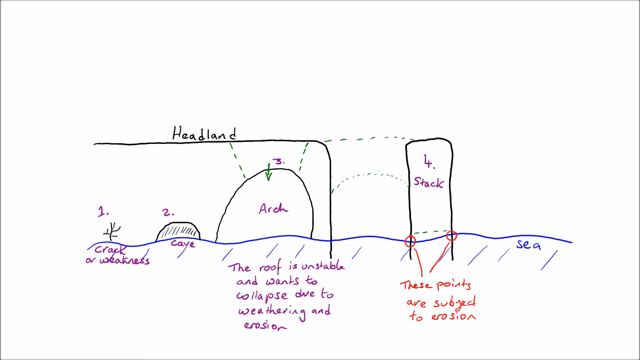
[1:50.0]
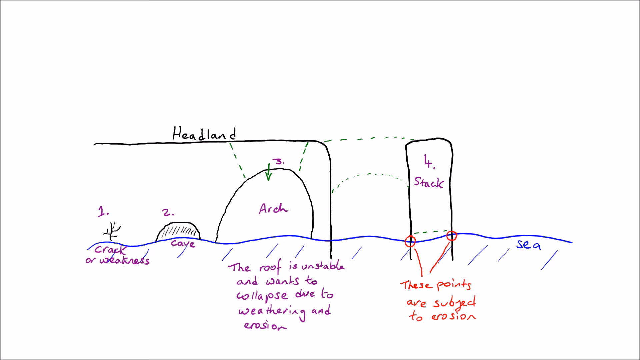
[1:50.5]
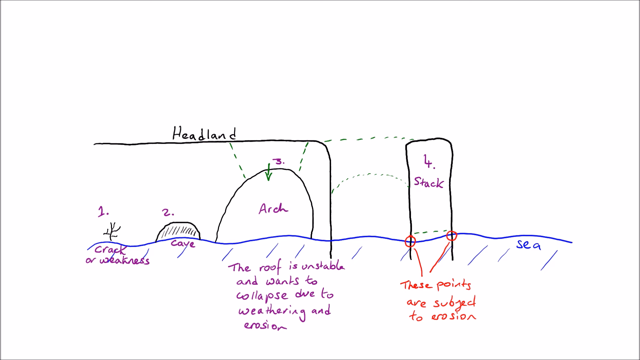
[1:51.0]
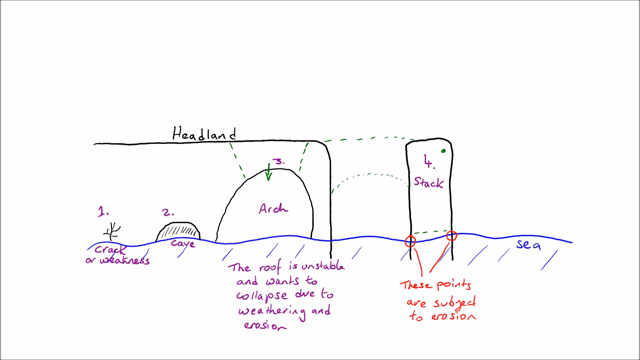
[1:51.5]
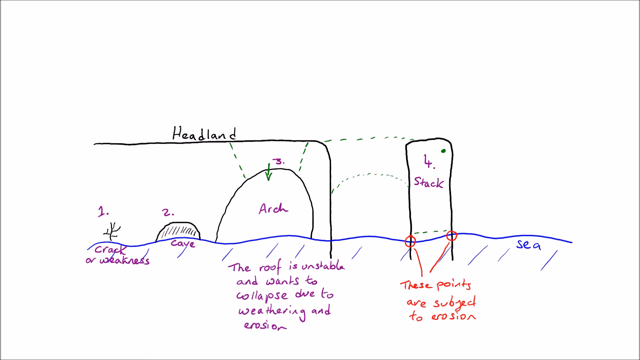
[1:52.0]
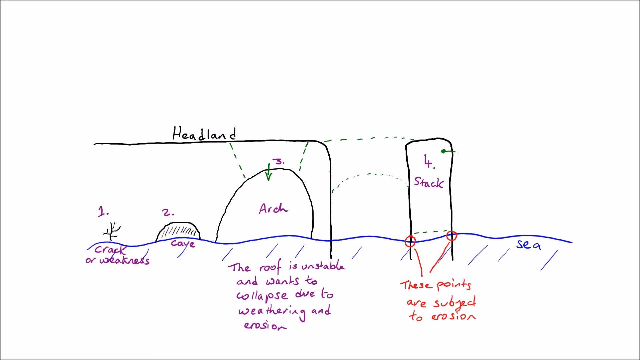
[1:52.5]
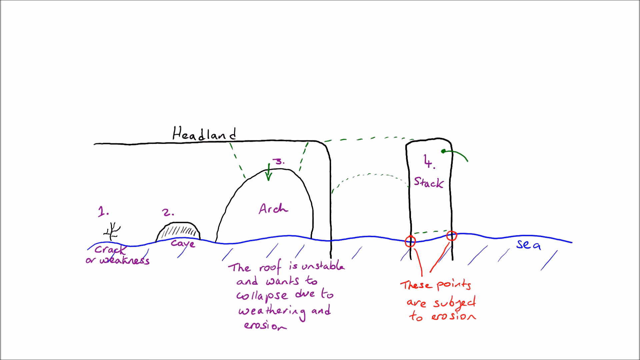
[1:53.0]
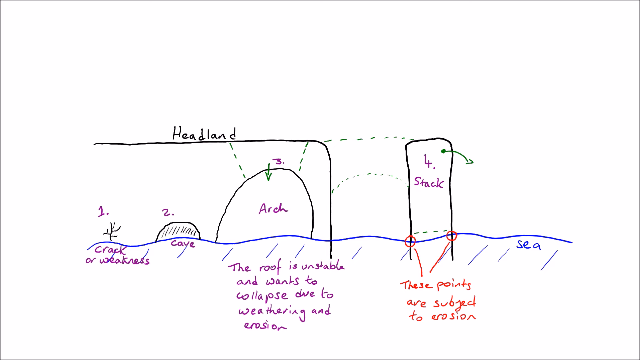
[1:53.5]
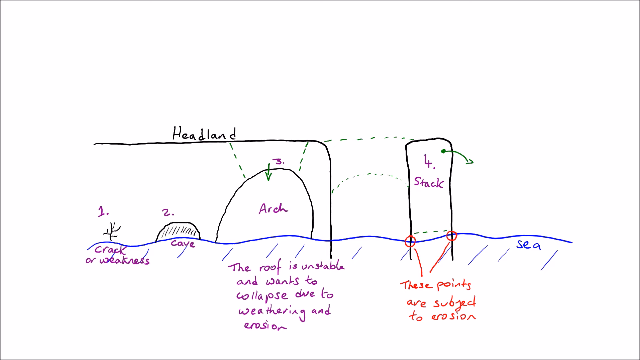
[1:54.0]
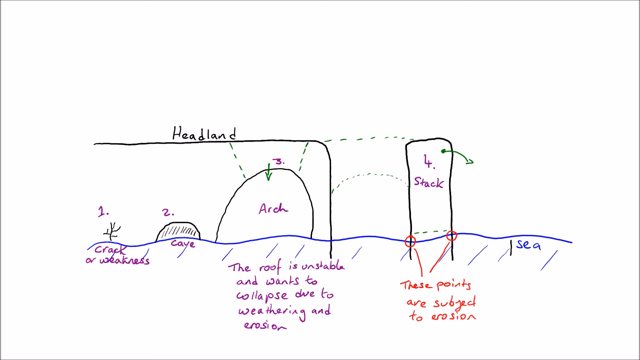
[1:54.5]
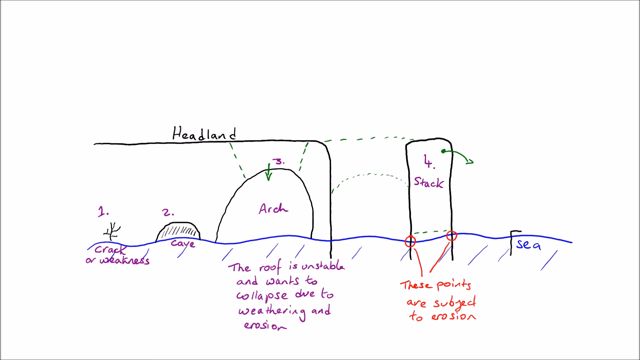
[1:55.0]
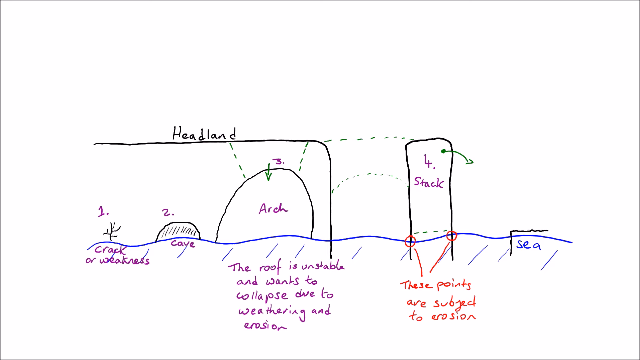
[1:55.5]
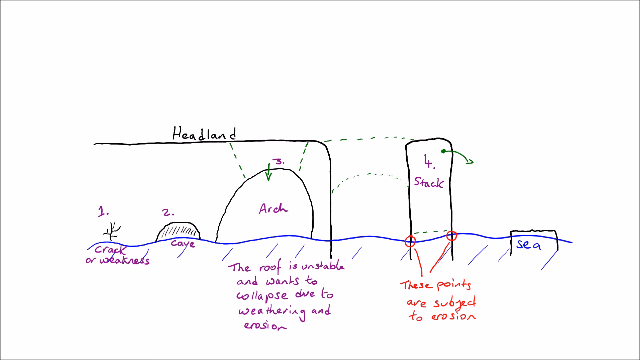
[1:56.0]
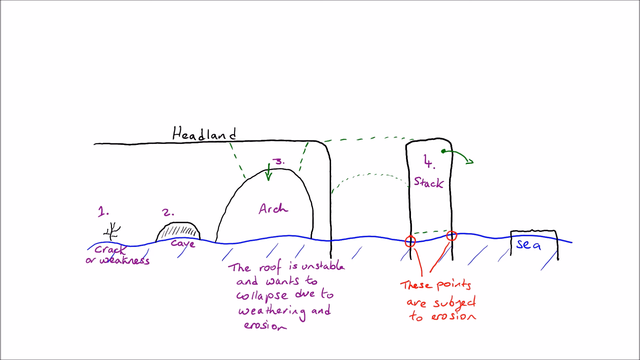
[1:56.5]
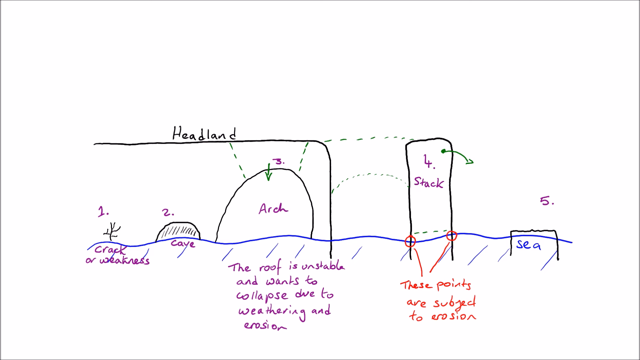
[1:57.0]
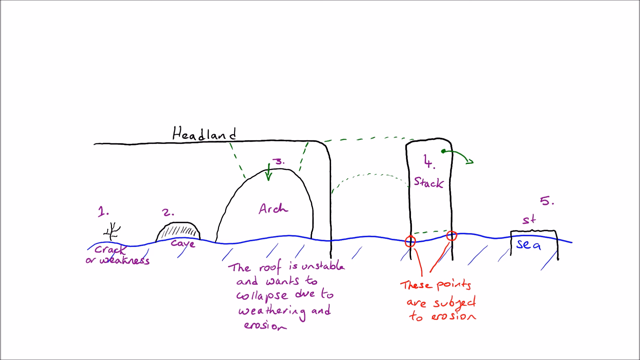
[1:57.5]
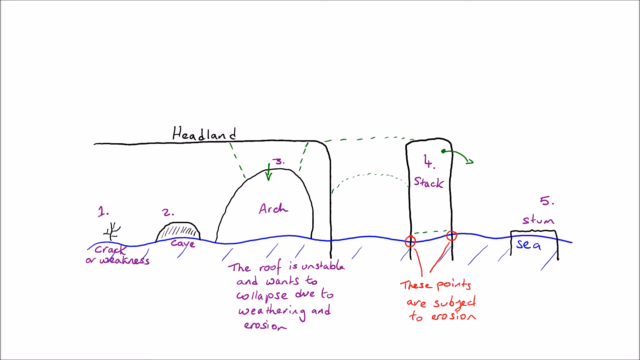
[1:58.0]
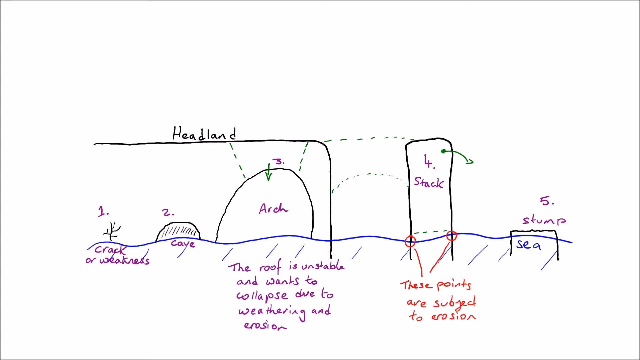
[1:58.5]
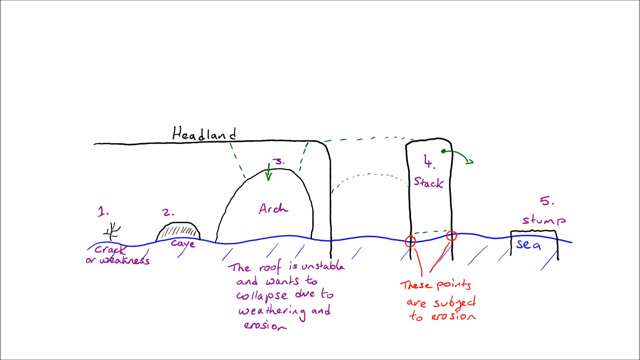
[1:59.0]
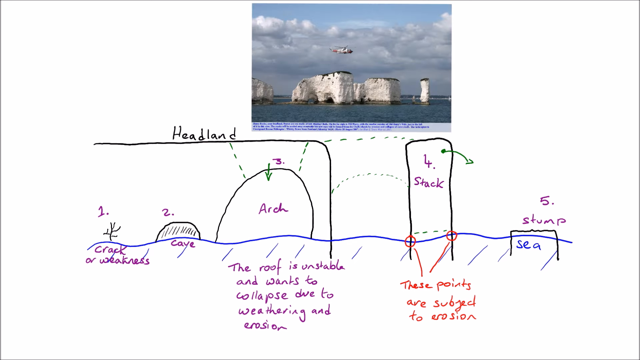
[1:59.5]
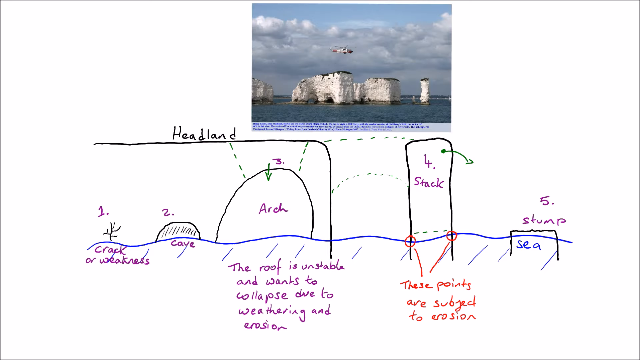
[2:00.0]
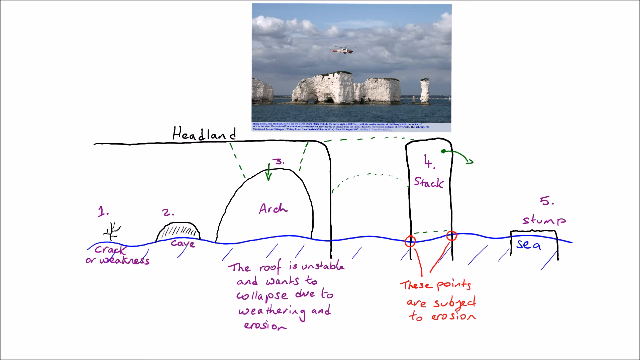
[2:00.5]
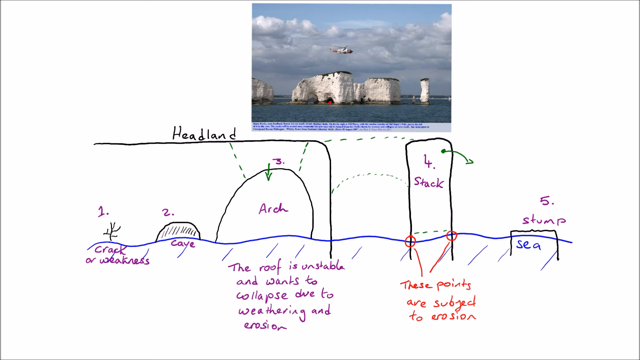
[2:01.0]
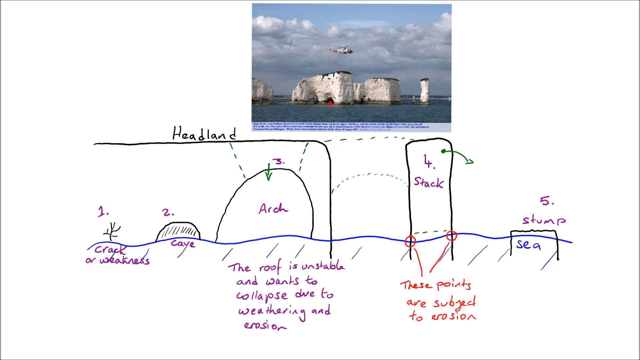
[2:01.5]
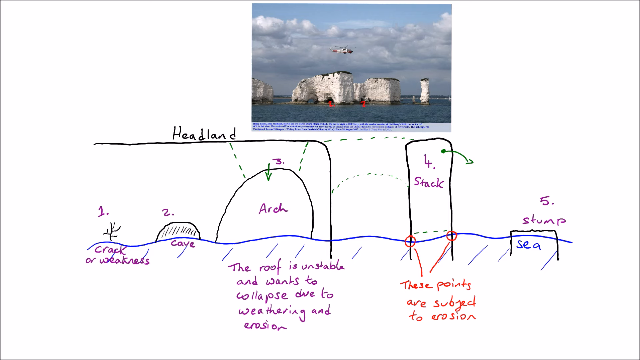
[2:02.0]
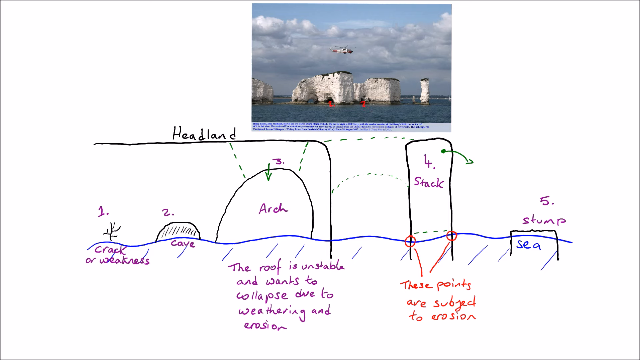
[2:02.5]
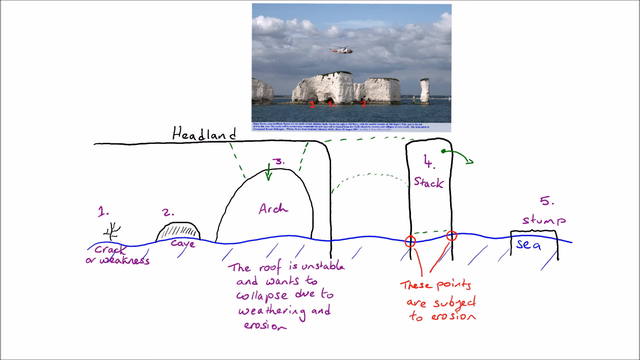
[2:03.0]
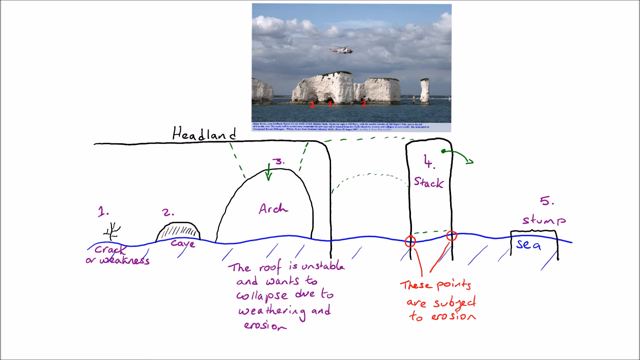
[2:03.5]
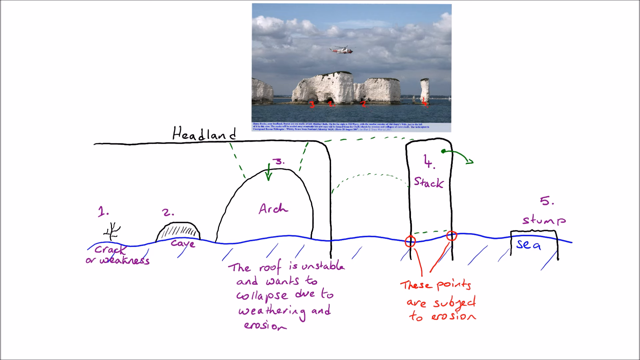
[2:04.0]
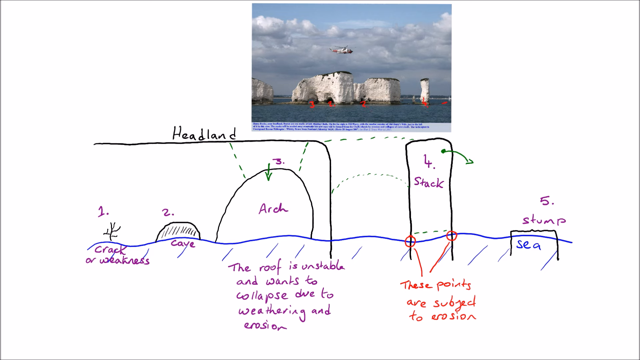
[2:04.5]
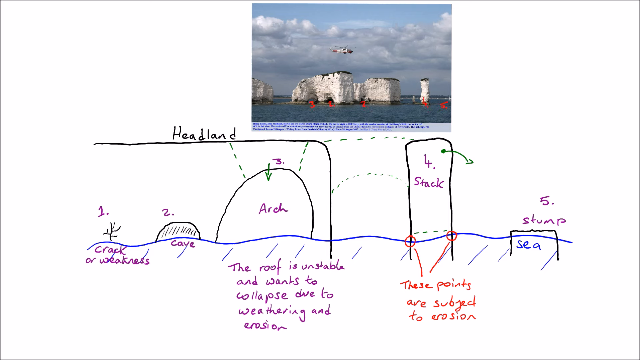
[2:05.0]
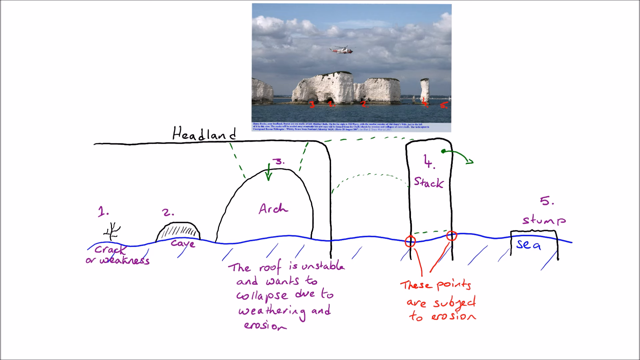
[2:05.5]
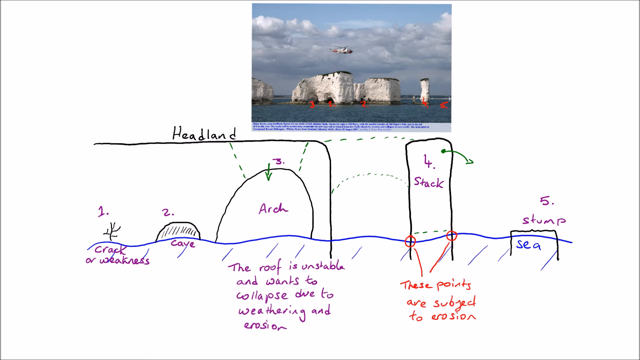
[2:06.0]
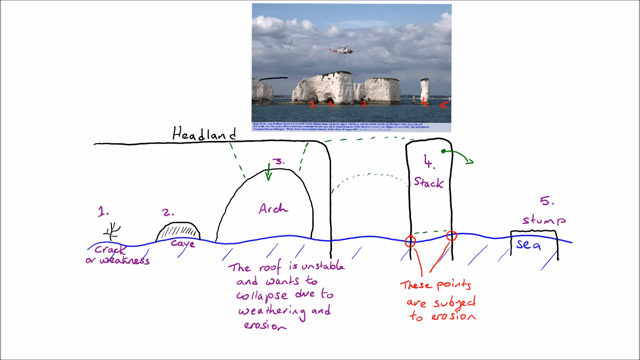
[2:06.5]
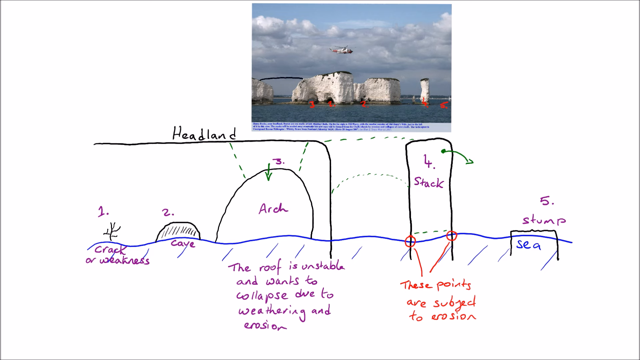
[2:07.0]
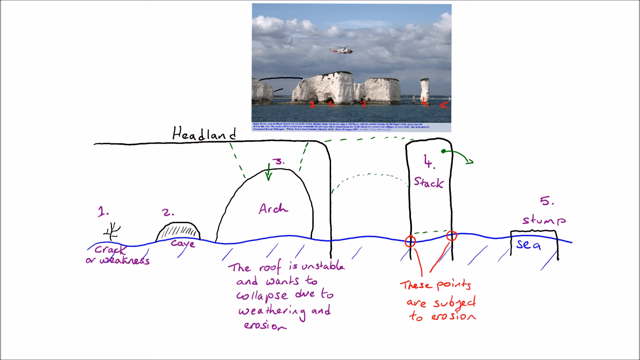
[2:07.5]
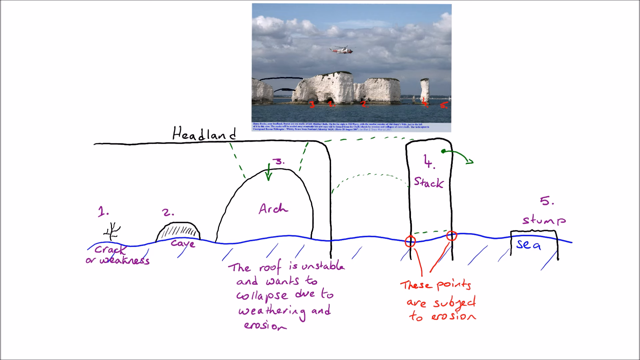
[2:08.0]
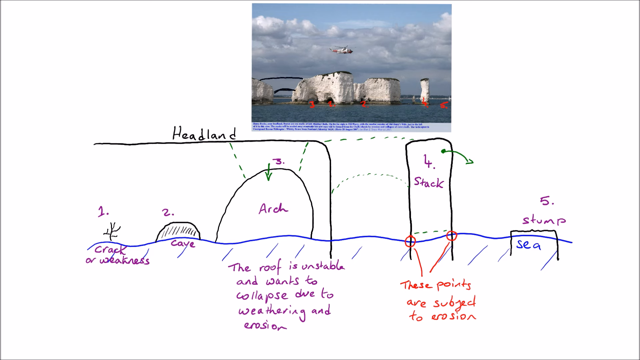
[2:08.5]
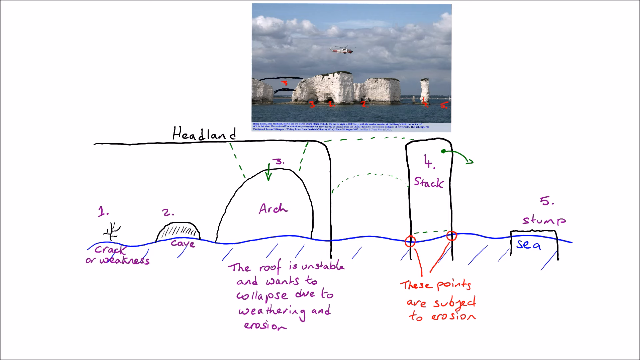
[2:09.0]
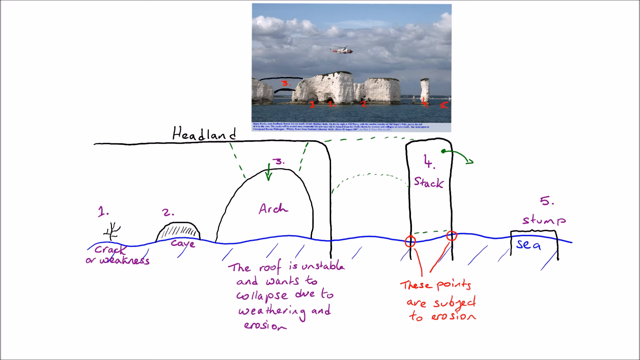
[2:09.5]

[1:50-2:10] The stack, which looks separated from the headland, is marked as number four. Two points are marked in red, with text saying these points are subjected to erosion and are at sea level. Then the stump, number five, appears, the lowest of the features and also at sea level. A more detailed picture then pops up, with headland-like structures identical to the diagrams drawn below it. It shows a crack or weakness, the cave, the arc, the stack and the stump, with text saying the roof of the arc is unstable and due to collapse due to weathering and erosion.